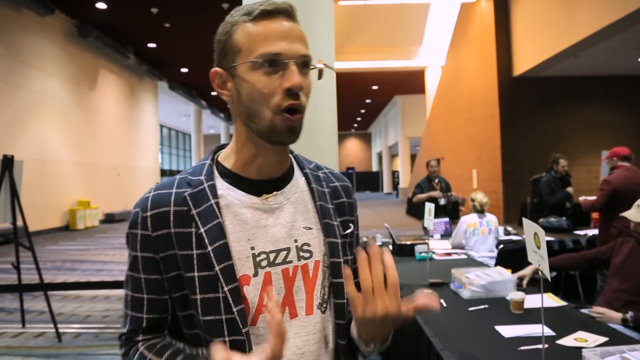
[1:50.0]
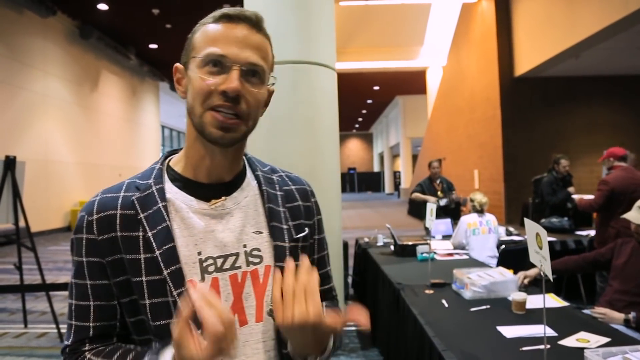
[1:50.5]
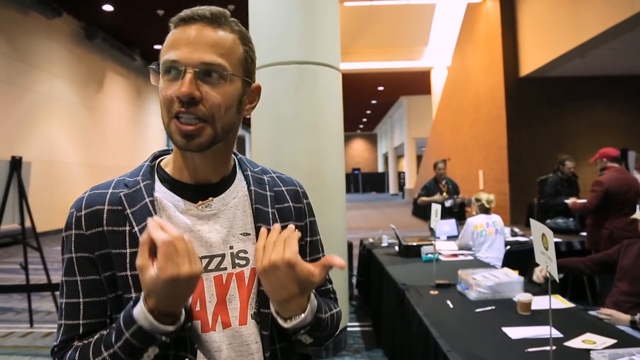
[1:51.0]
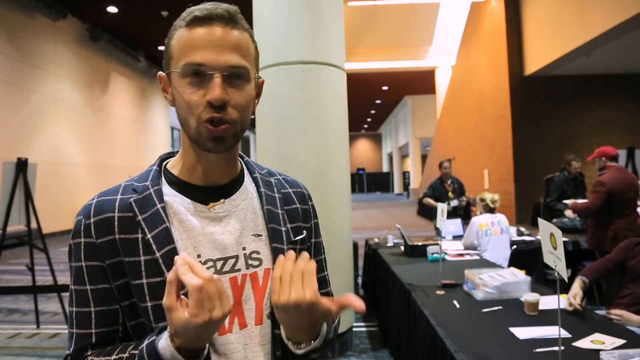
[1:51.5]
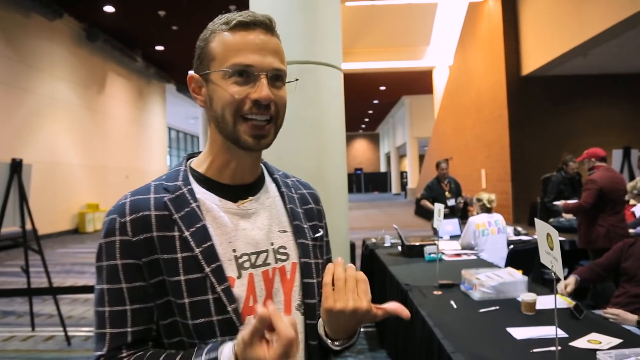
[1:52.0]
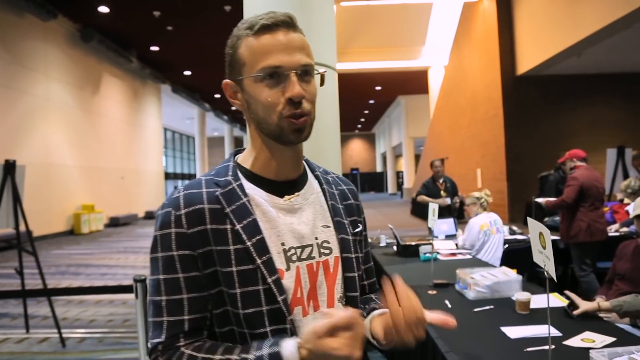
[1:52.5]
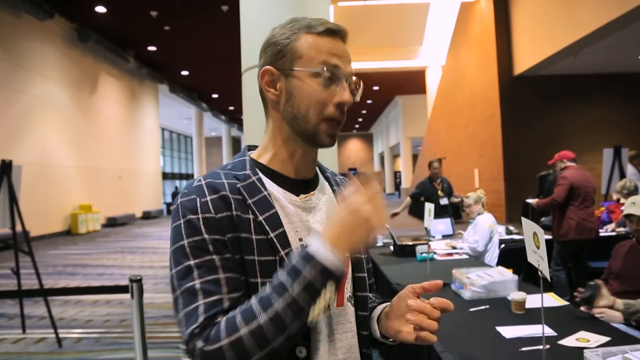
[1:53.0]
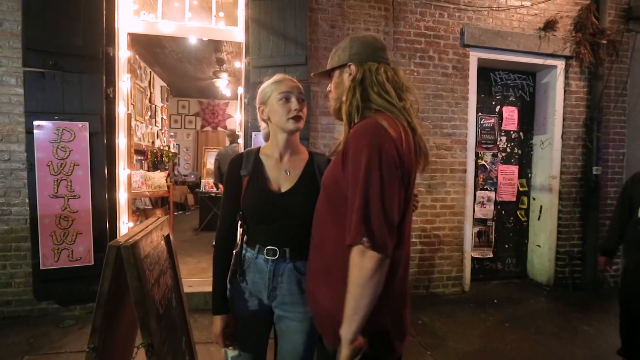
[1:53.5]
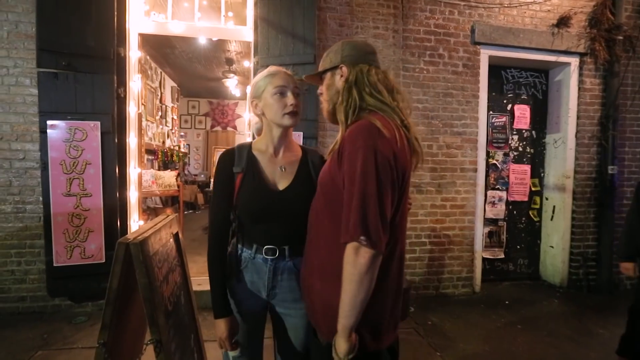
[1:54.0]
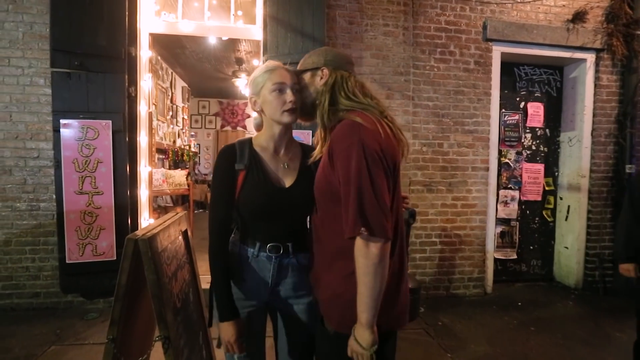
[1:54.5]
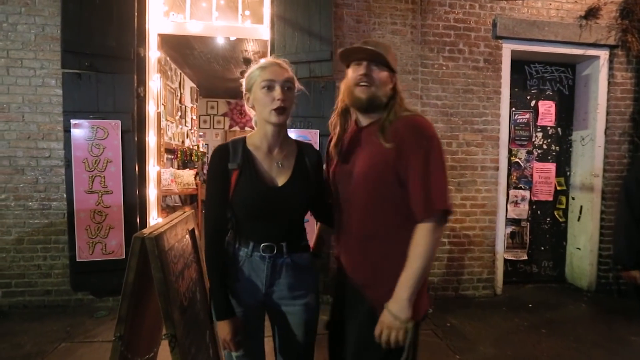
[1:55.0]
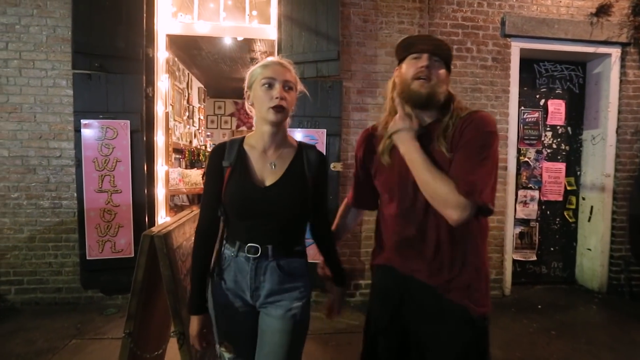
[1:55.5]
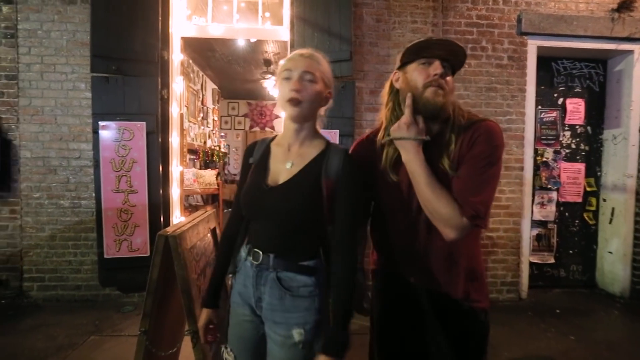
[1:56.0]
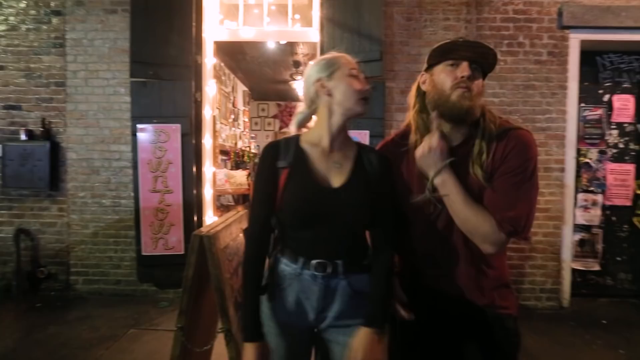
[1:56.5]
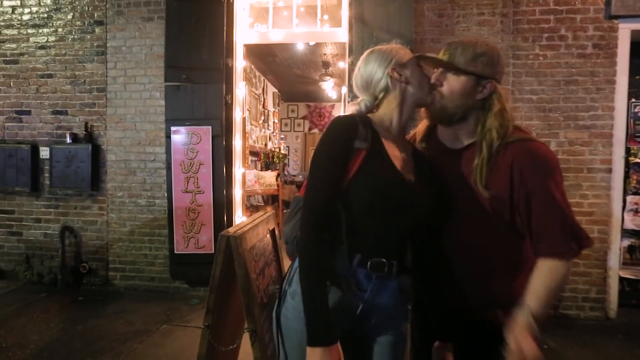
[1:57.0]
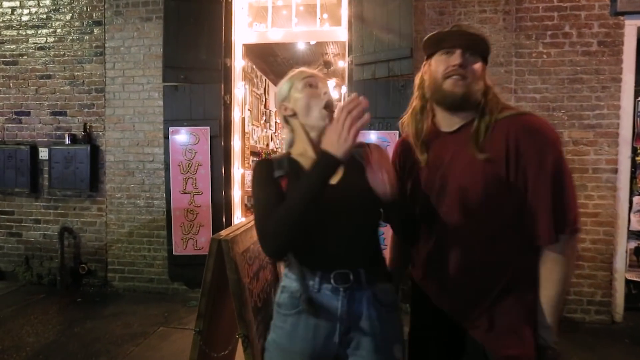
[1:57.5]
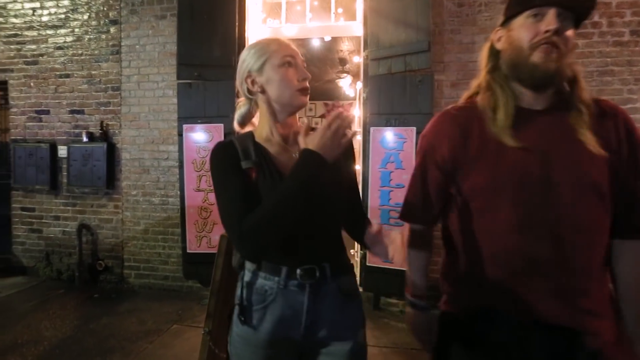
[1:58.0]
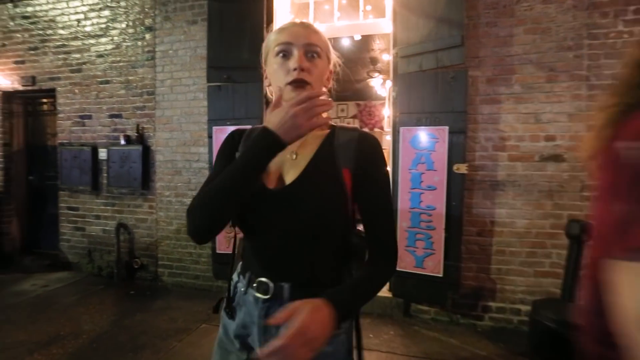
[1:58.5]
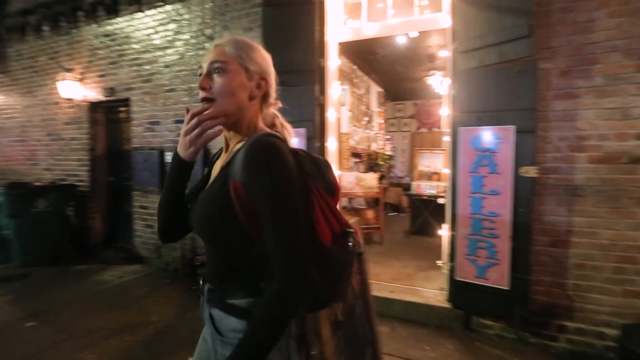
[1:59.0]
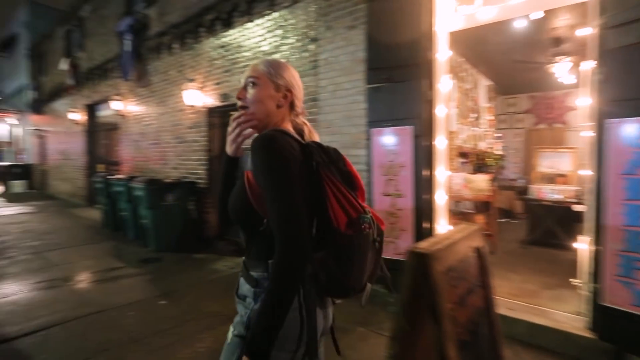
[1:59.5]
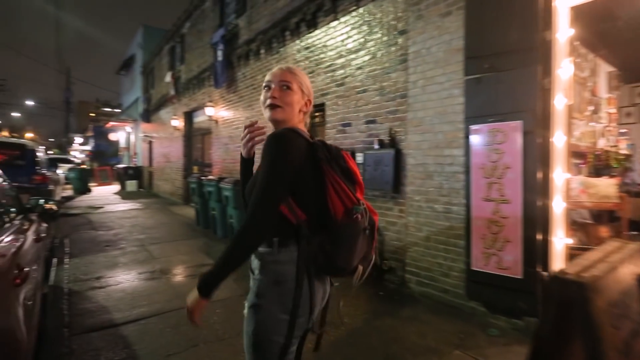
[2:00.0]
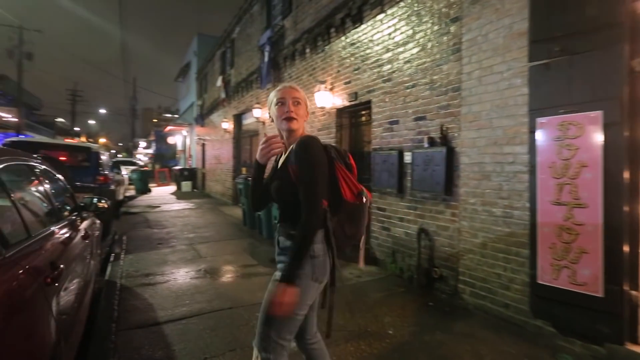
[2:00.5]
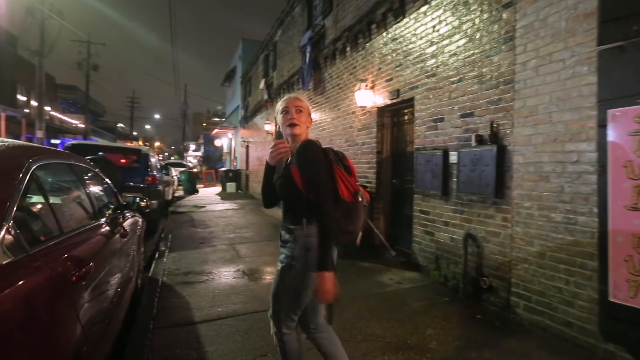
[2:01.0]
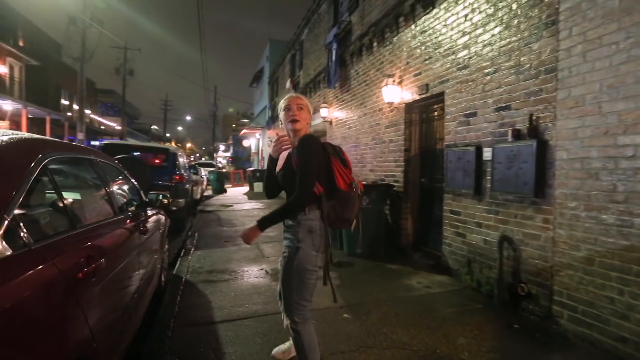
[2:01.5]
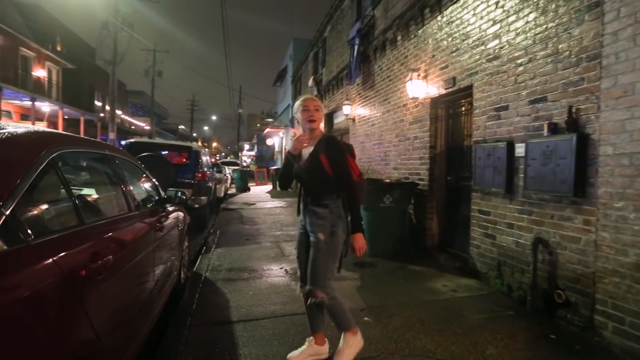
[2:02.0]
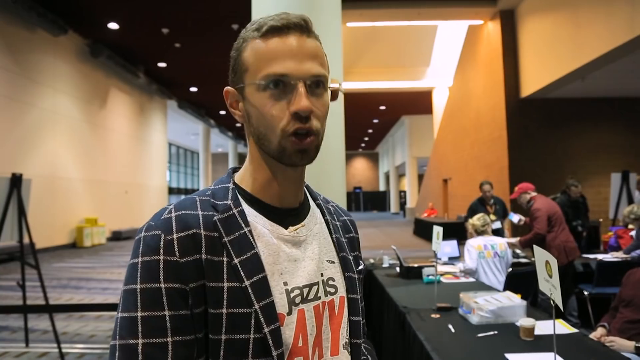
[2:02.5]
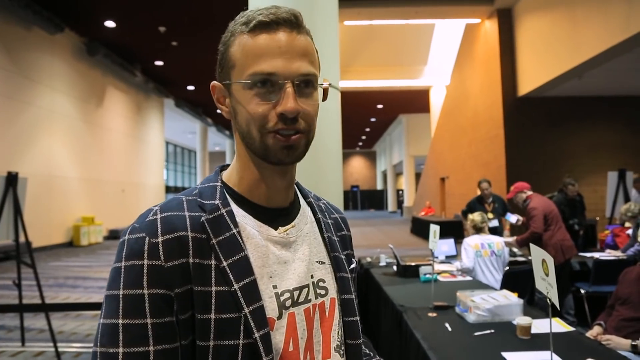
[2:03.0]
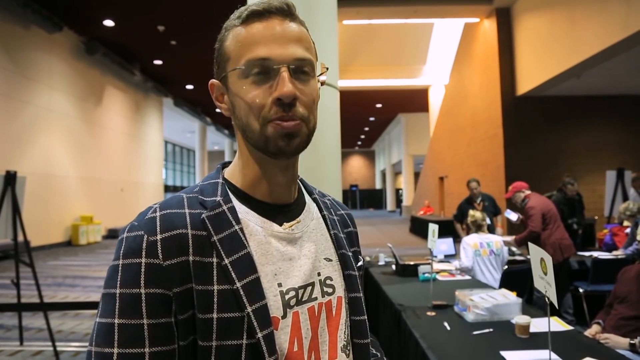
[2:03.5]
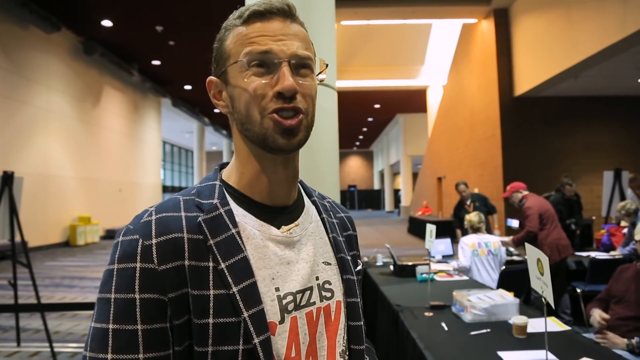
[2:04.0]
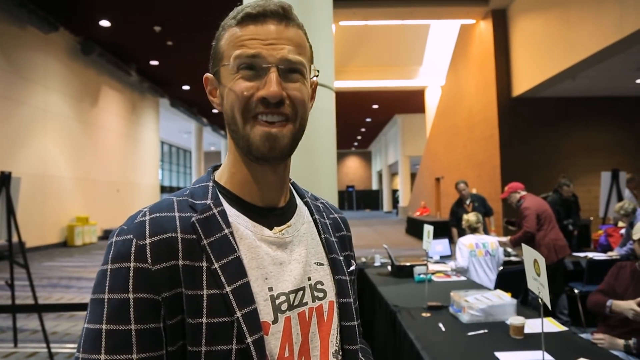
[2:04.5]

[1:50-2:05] A man who appears to be in his thirties, with short brown hair, a short brown beard and glasses, wears a T-shirt that says "Jazz is Saxy" under an open navy blue and white plaid shirt. He stands in what appears to be a convention center hallway in front of tables covered in black cloths with various papers and signs on them, and talks to the camera. A man and a woman are behind the tables, and several guests in front of the tables are getting information. The scene then changes to an outdoor street at night. A man with a red shirt, long, kind of scraggly brown hair, a brown beard and a baseball cap stands with a woman in a long-sleeved black shirt, jeans and a black belt, with blonde hair pulled into a ponytail. As they part ways, he gives her a peck on the cheek; she turns to do the same, but he switches his mouth back so she ends up kissing his lips. He laughs as if it were a joke, and she looks a little stunned as she walks away down the street.